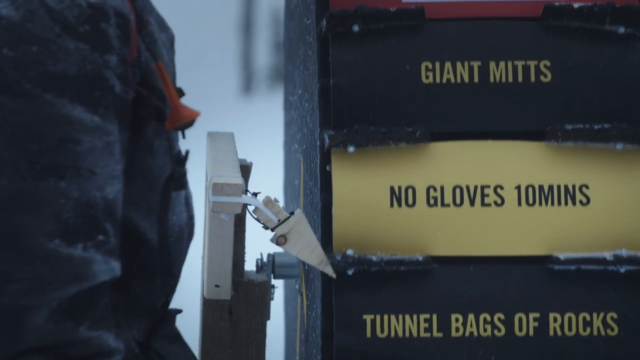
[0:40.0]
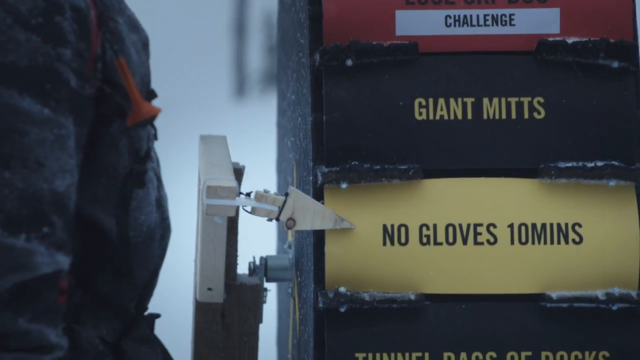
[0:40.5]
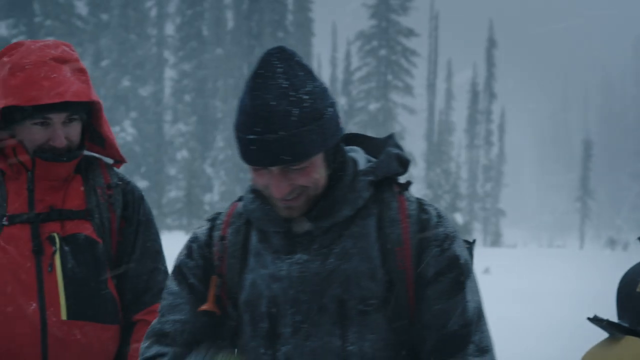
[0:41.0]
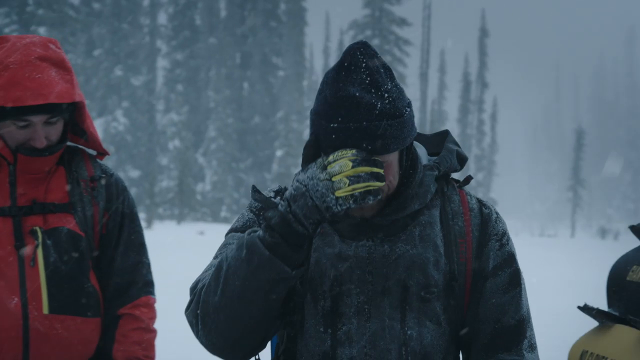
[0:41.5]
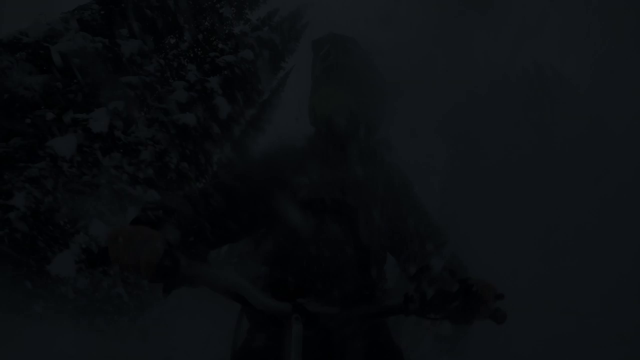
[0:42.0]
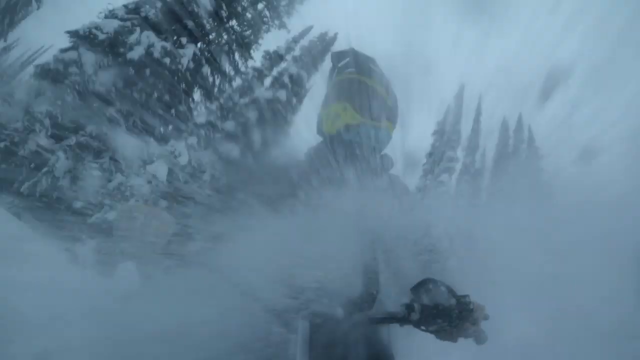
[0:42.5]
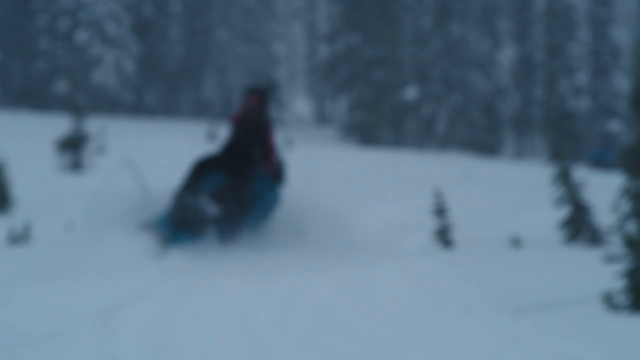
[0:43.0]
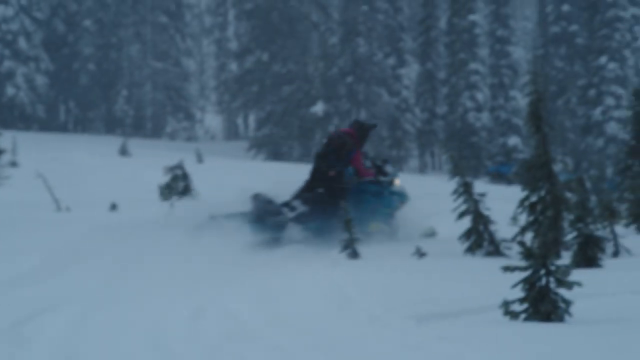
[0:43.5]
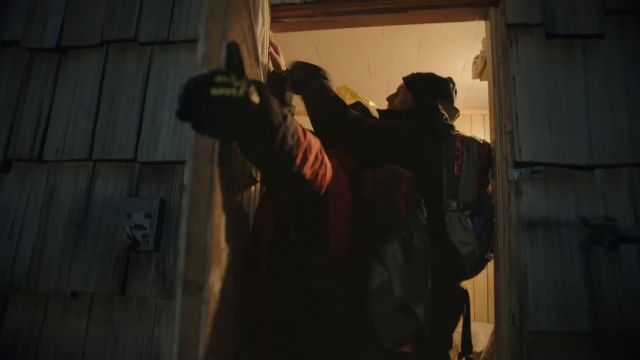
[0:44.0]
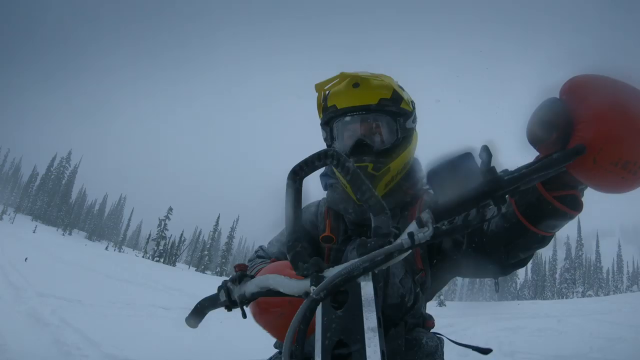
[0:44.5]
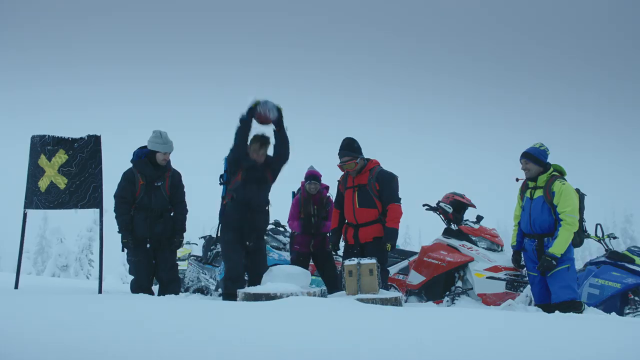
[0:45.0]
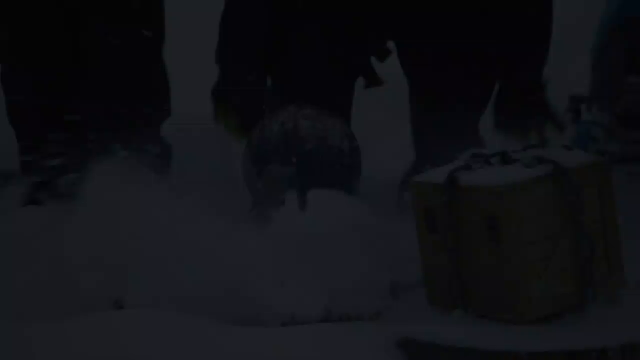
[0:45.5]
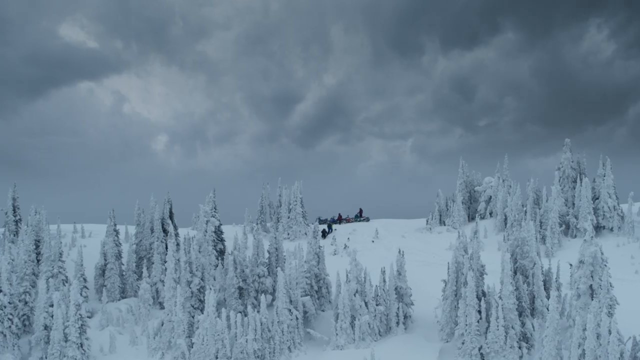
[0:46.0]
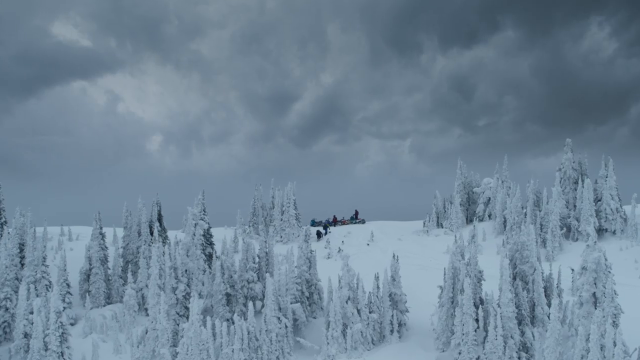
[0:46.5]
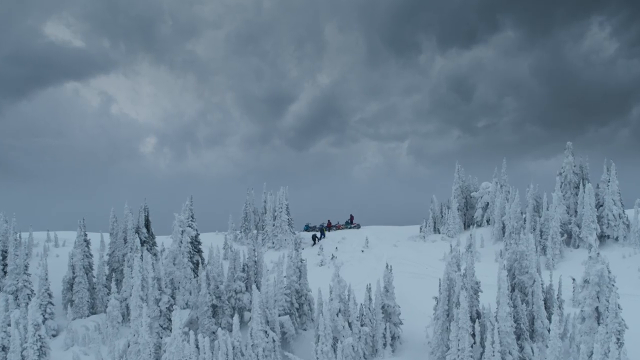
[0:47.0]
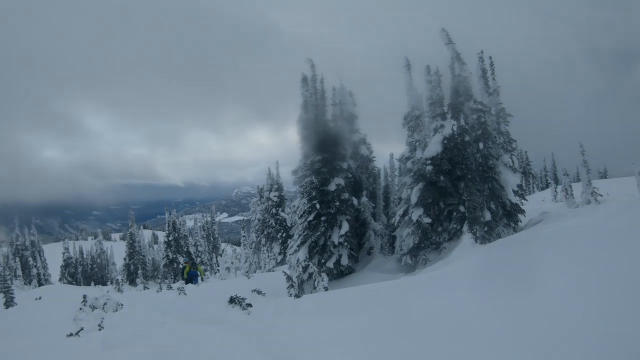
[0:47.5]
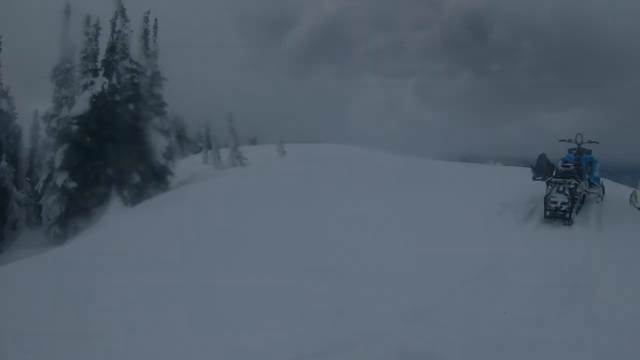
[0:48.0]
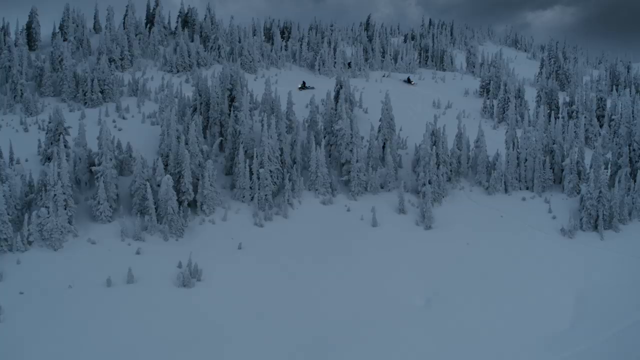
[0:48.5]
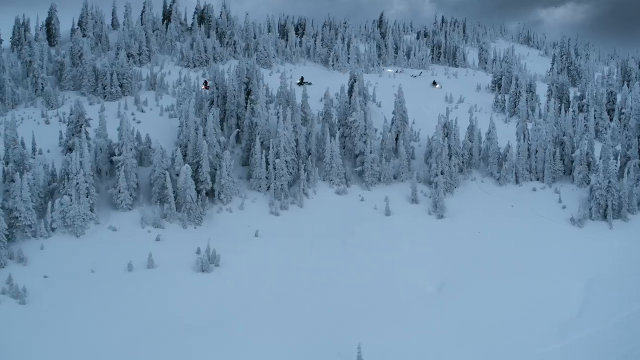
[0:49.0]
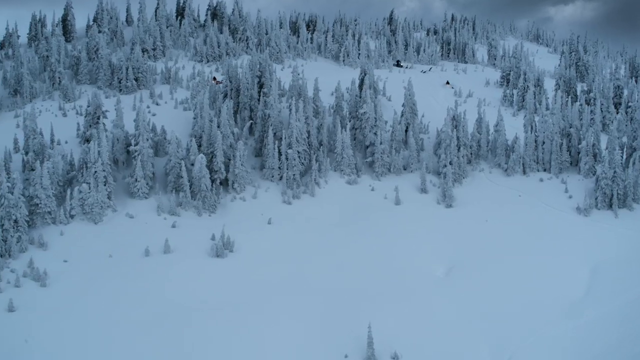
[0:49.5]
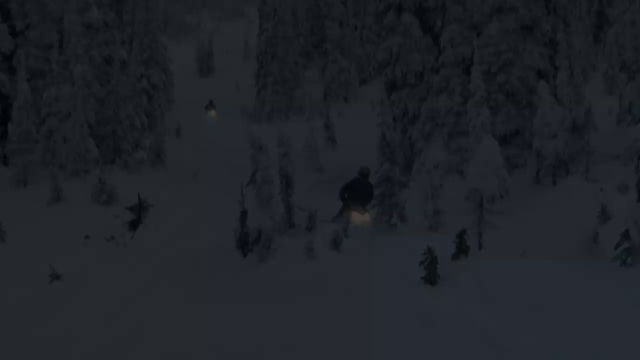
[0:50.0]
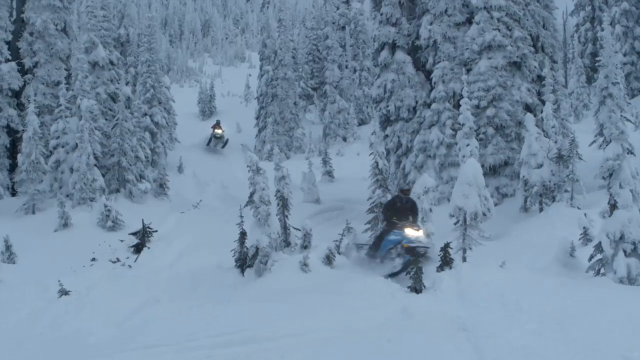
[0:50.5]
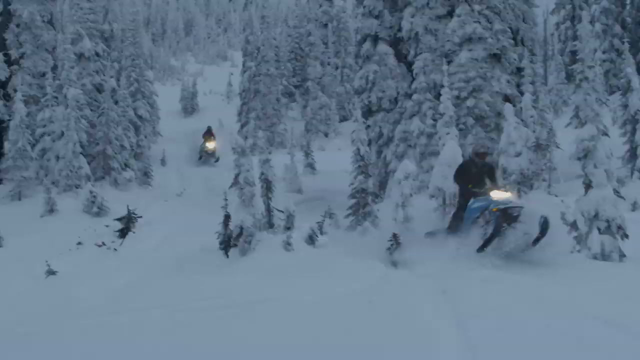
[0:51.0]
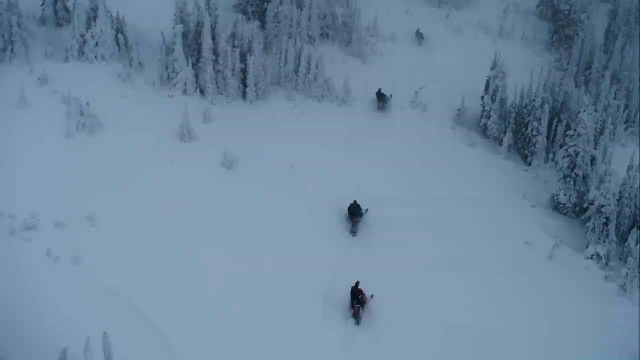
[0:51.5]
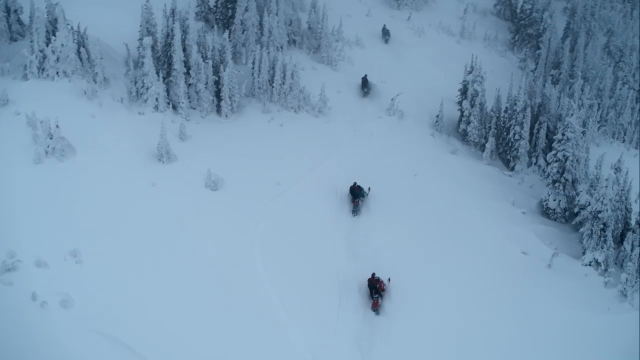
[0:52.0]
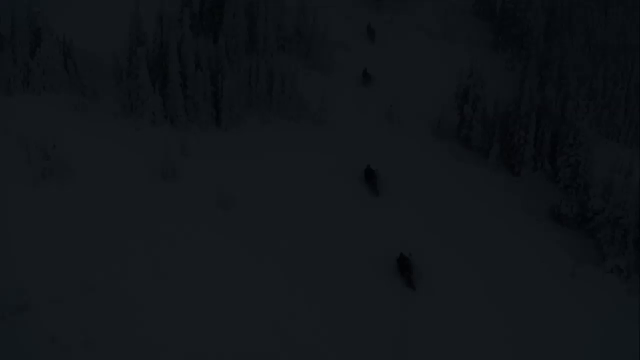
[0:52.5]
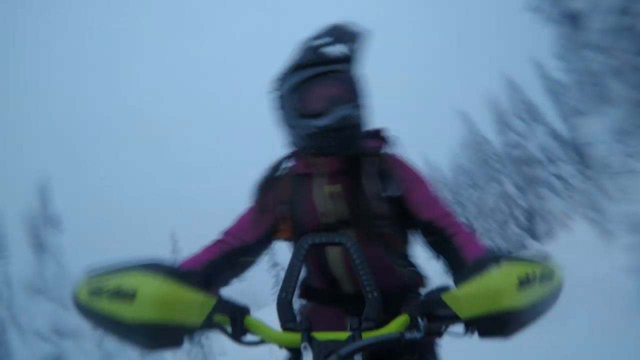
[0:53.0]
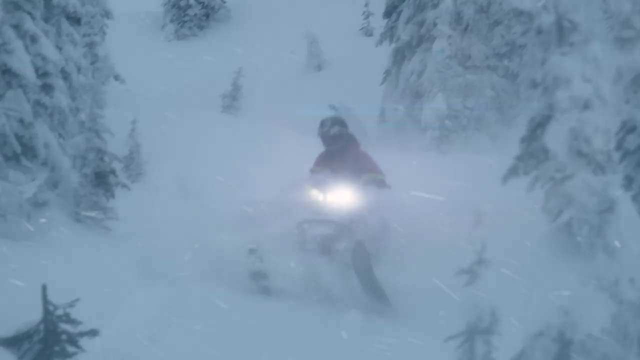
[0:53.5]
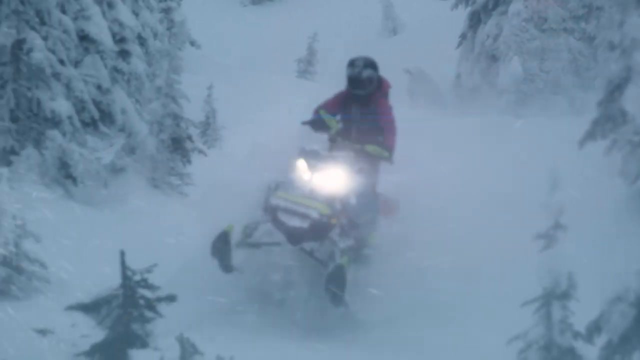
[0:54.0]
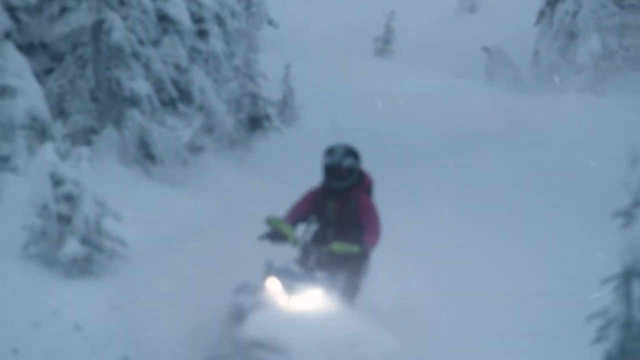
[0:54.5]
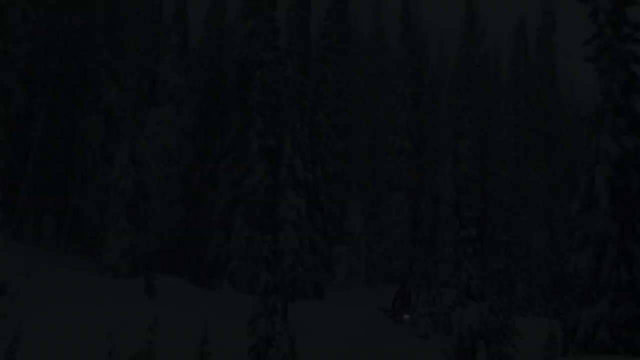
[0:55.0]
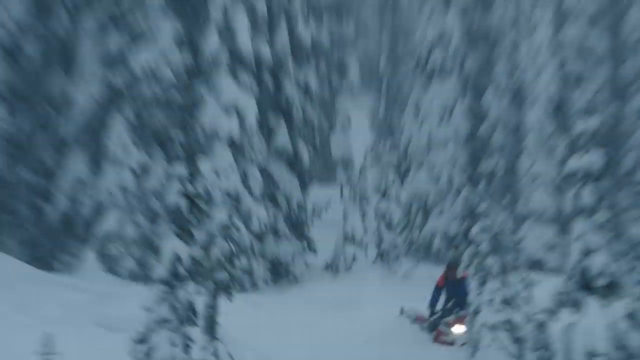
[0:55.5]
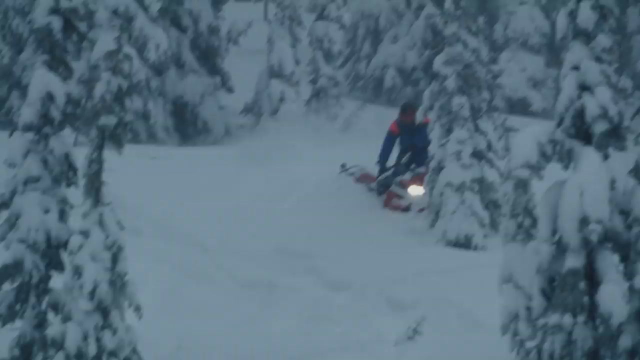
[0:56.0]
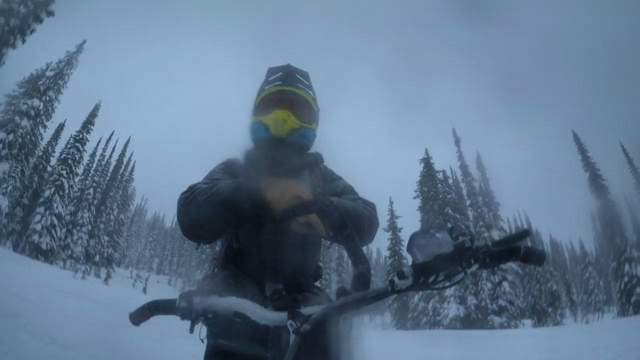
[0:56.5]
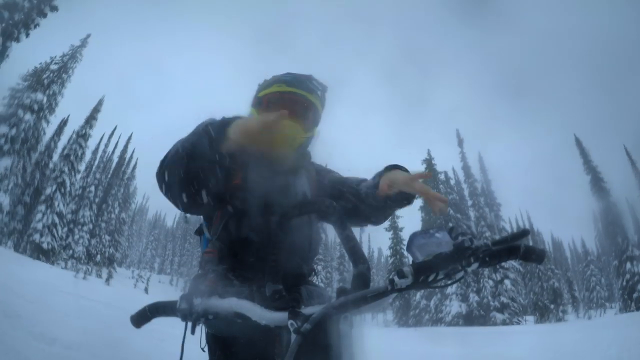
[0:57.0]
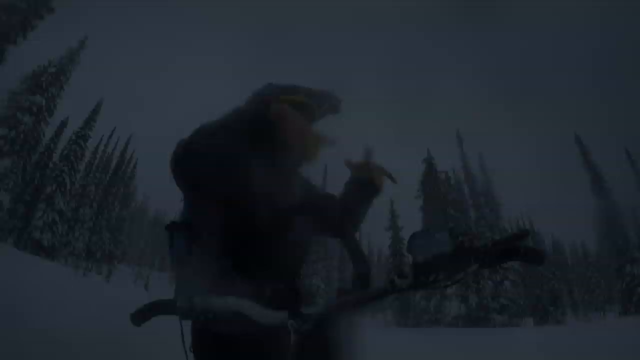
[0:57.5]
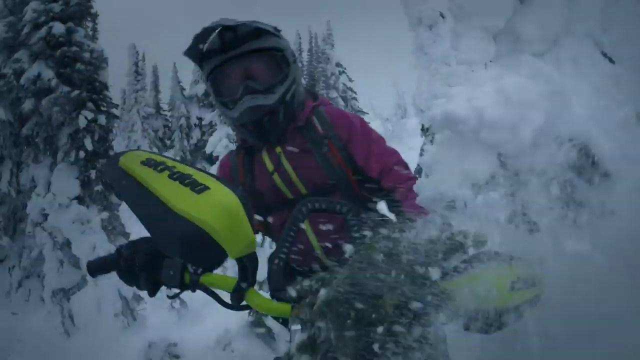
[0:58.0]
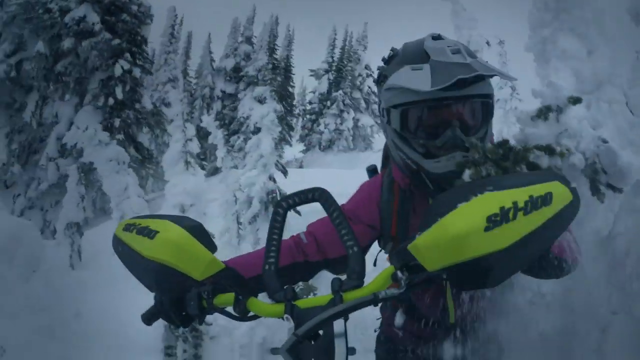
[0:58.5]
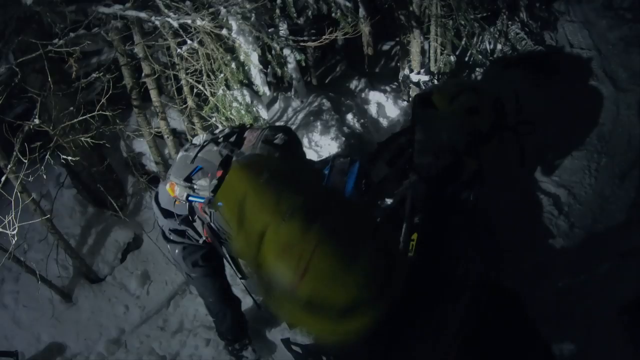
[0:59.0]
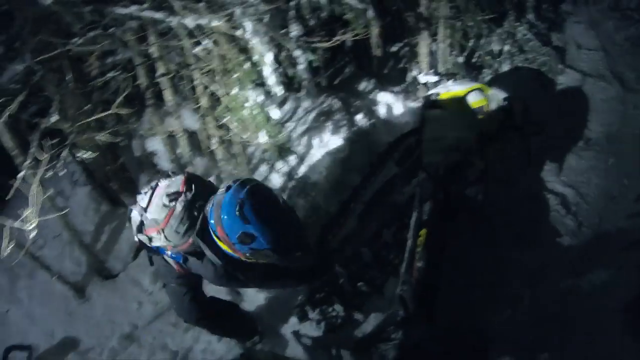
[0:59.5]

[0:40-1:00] A wheel-like spinner shows challenge options, including "giant mitts", "no gloves, 10 minutes" and "tunnel bags", and it lands on "no gloves, 10 minutes", apparently deciding a challenge in which a person must go without gloves. The group reacts as though this one will be tough, and one person rubs their hands. Everything, including the trees, is covered in snow, and it looks very cold.